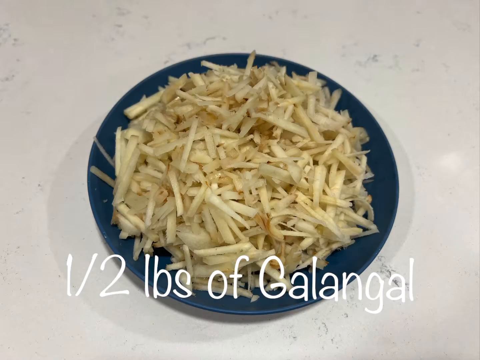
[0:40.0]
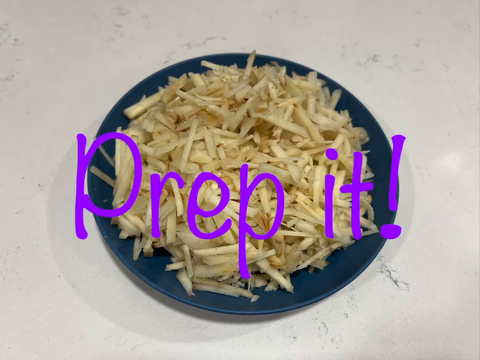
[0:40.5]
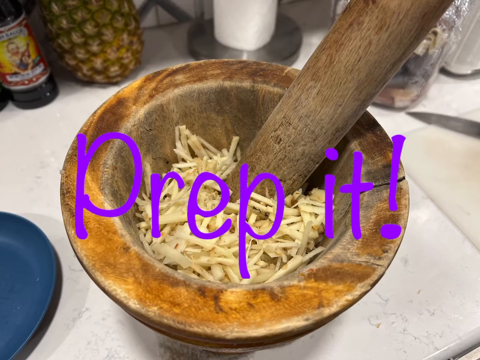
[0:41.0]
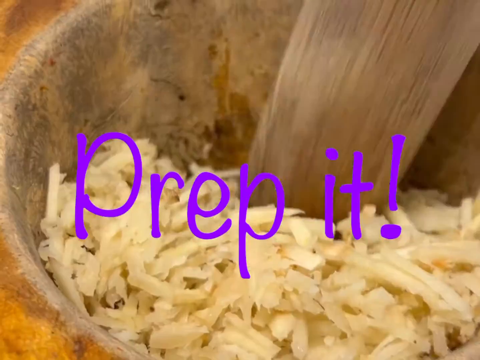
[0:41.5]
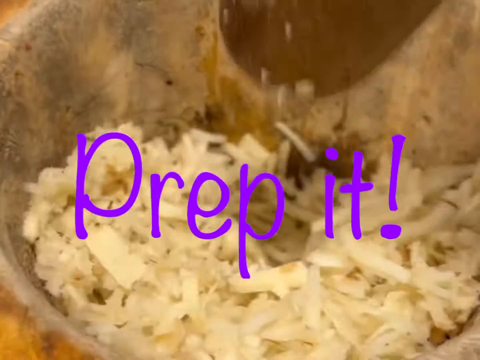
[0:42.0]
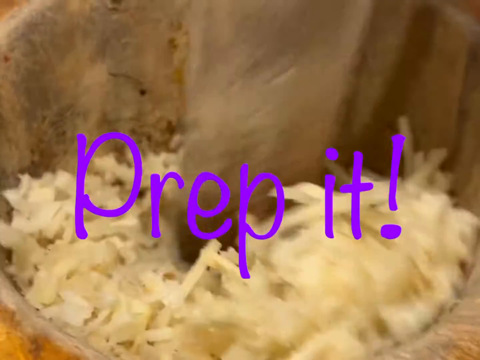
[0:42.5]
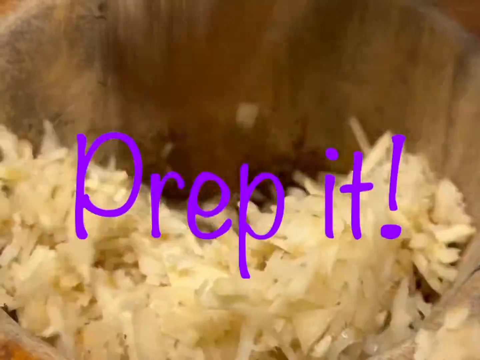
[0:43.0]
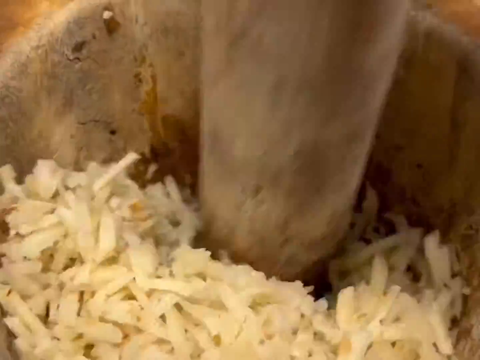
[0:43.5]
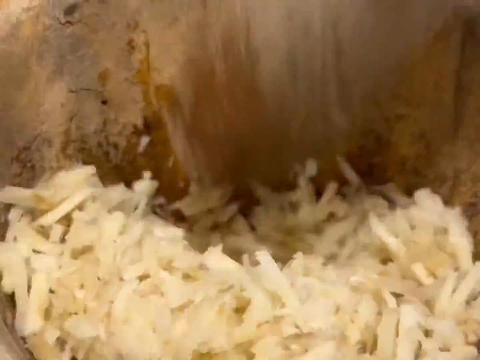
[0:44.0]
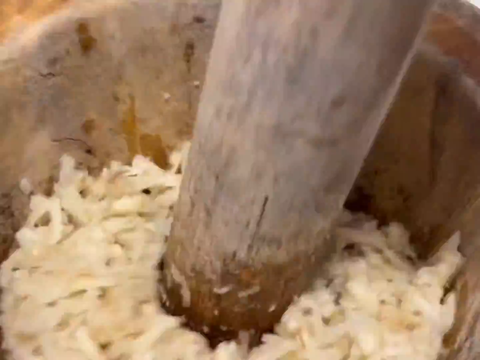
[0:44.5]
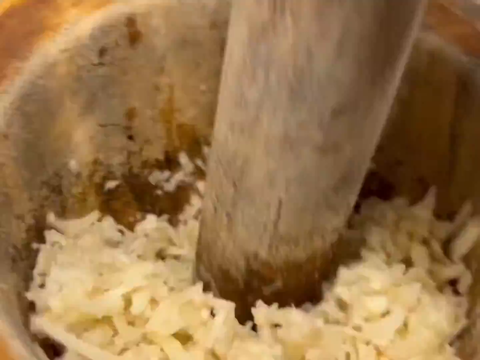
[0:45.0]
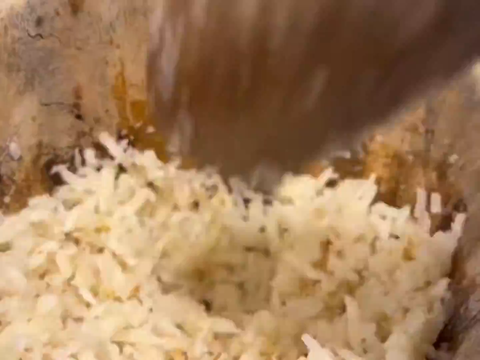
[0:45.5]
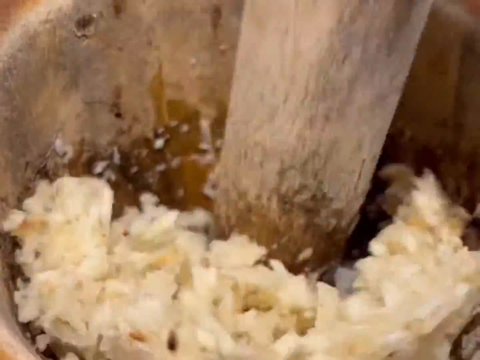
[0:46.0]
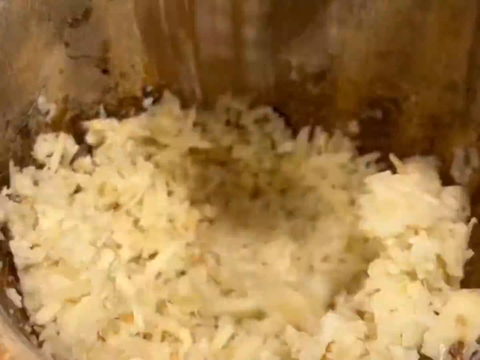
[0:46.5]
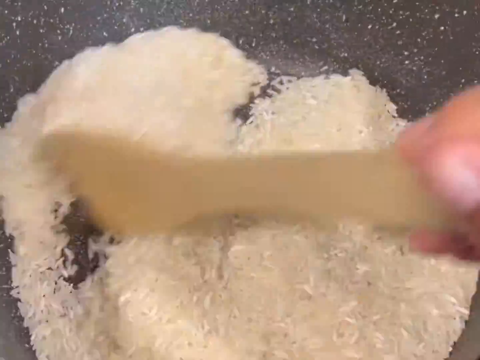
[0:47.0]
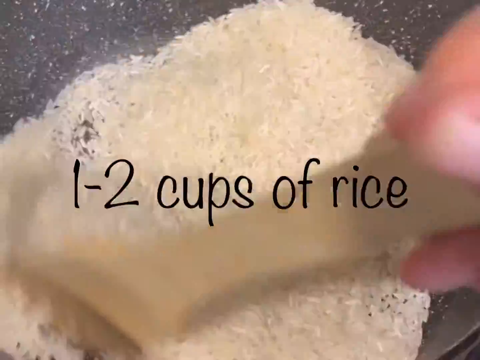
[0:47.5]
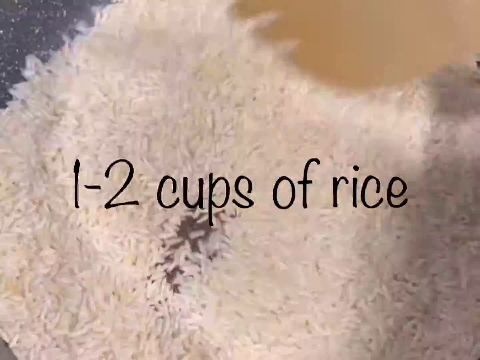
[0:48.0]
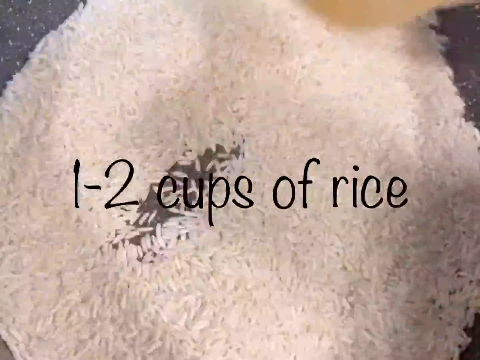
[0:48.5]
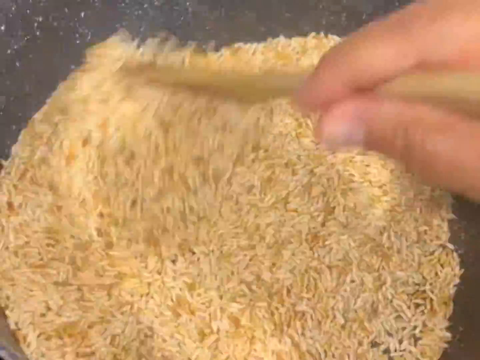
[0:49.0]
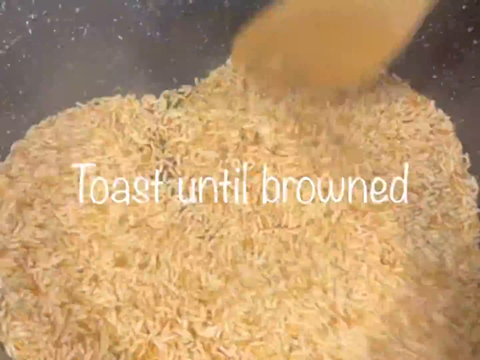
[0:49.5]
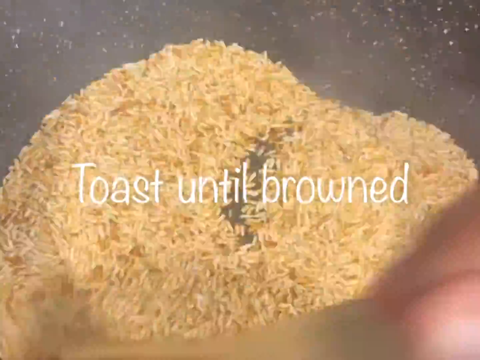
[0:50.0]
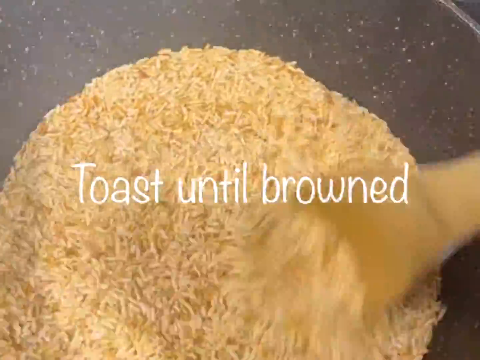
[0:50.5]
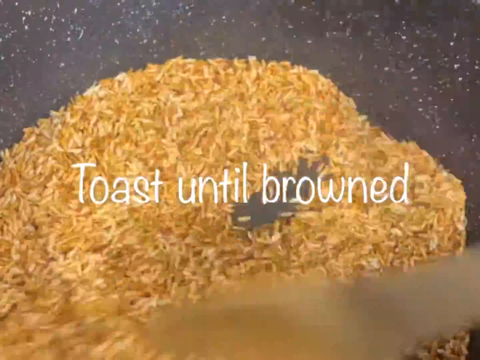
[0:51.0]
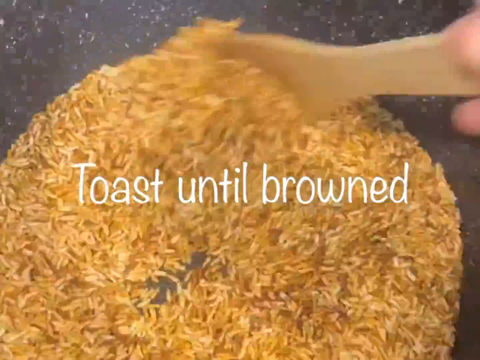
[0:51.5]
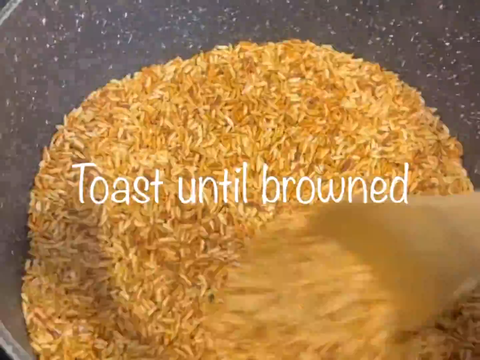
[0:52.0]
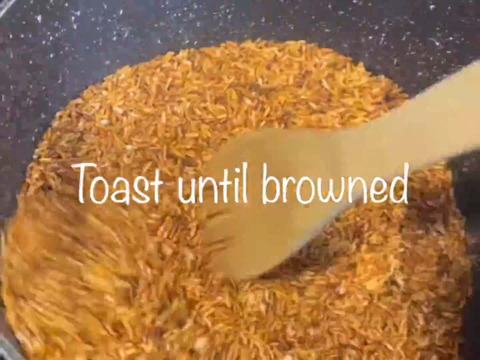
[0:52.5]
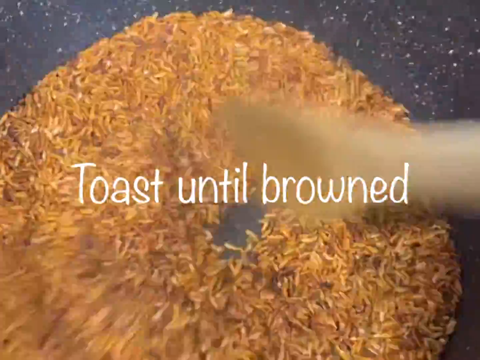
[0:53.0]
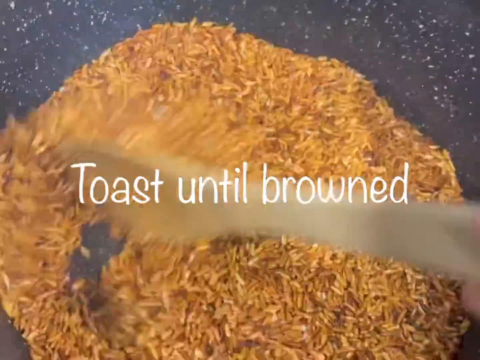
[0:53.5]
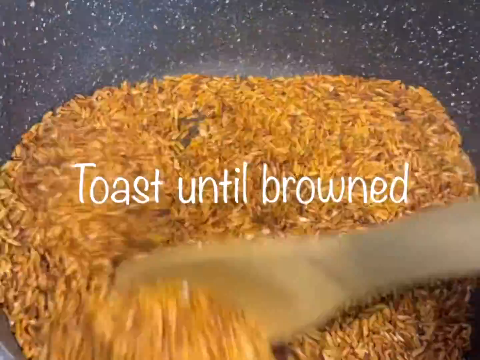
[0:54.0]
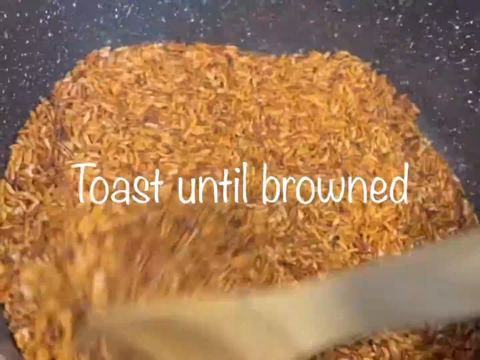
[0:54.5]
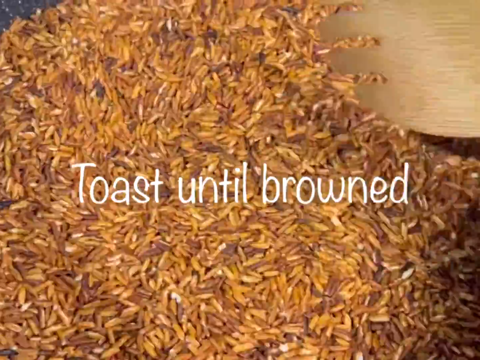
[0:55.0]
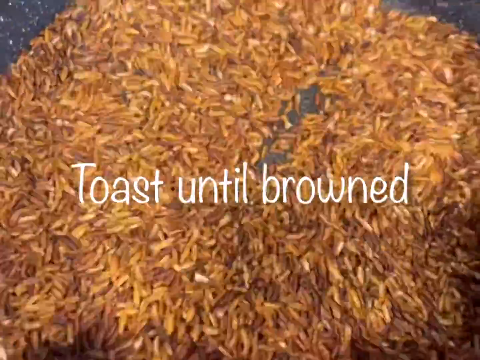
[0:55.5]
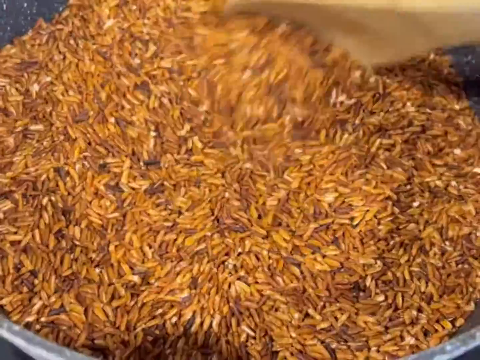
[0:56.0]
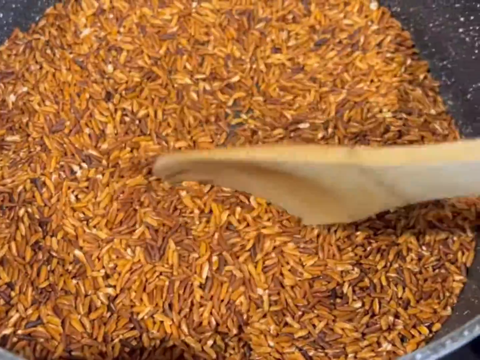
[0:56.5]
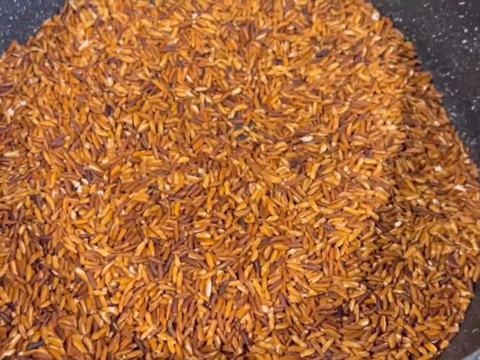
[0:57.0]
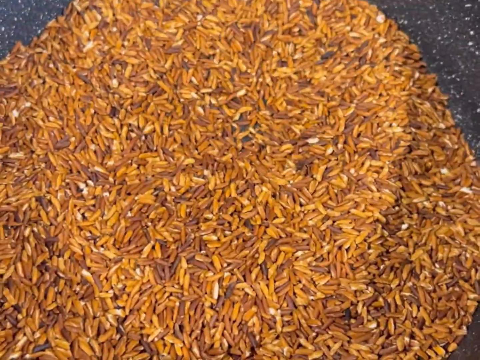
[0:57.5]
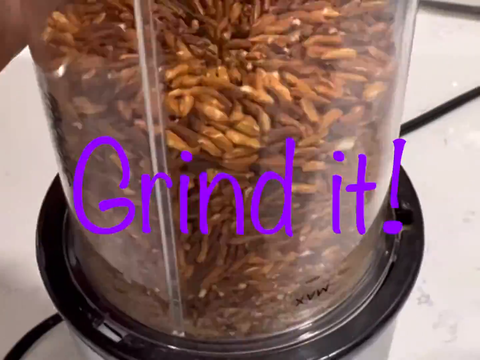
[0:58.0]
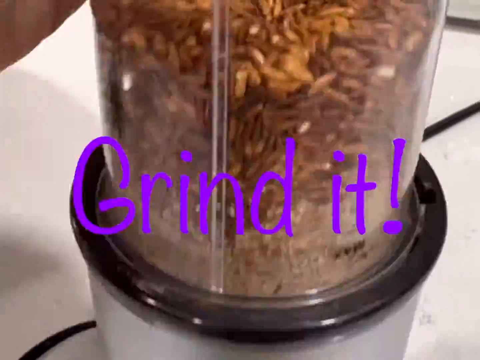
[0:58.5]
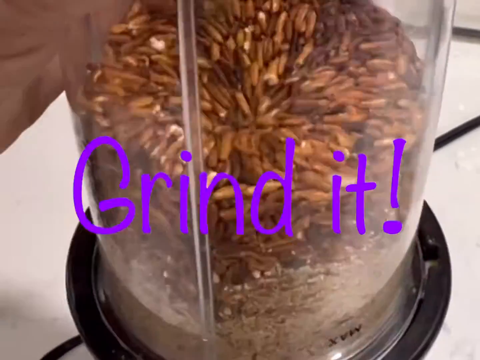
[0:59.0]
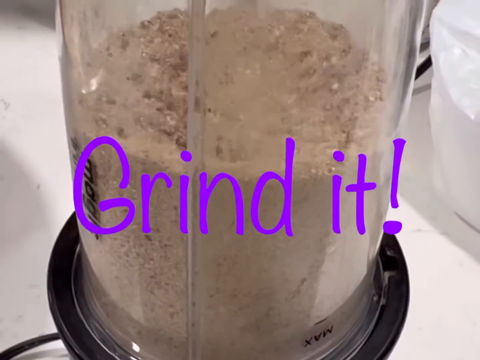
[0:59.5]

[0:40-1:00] A very sped-up video shows someone grinding galangal that has been chopped up into little pieces. Next, a very sped-up video shows someone toasting white rice until it is quite browned. Then something that looks like the rice is ground in a blender; it is unclear whether the galangal is being ground with it. Text overlay appears throughout the process. The pan holding the rice does not appear to be the same pan used for anything else so far.